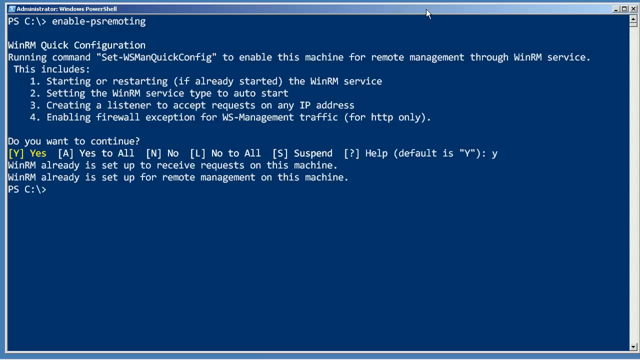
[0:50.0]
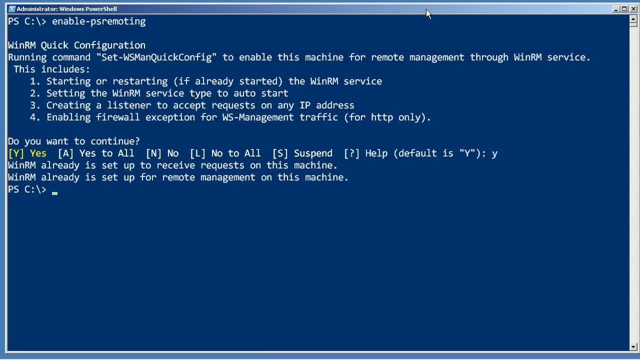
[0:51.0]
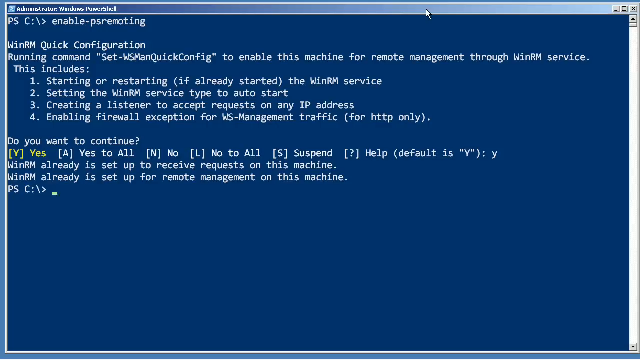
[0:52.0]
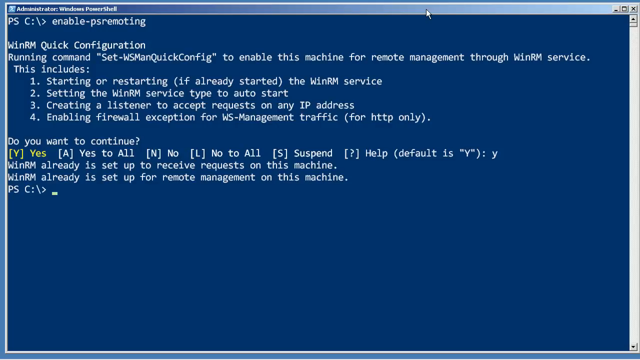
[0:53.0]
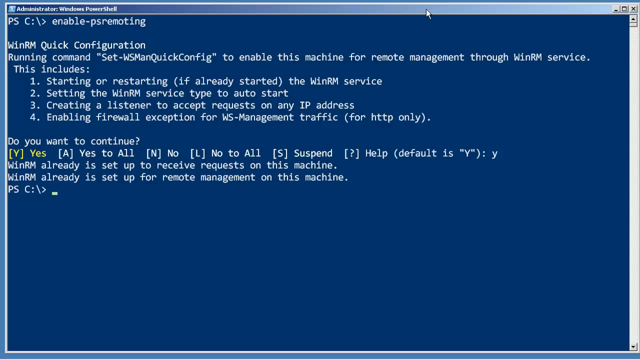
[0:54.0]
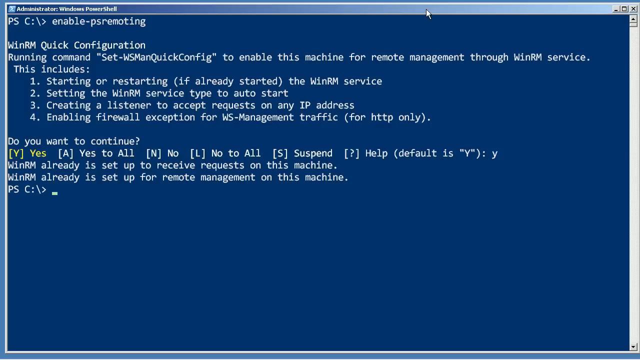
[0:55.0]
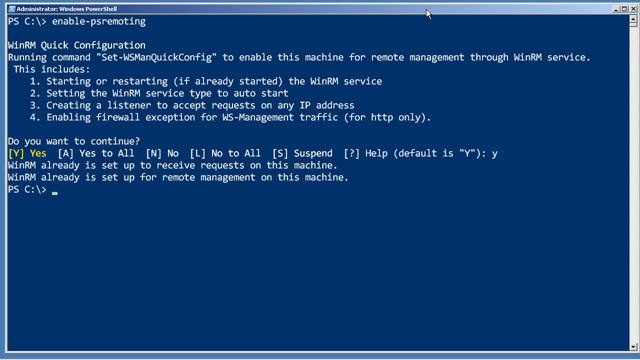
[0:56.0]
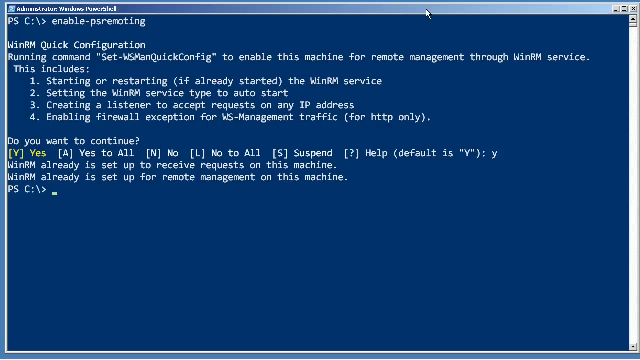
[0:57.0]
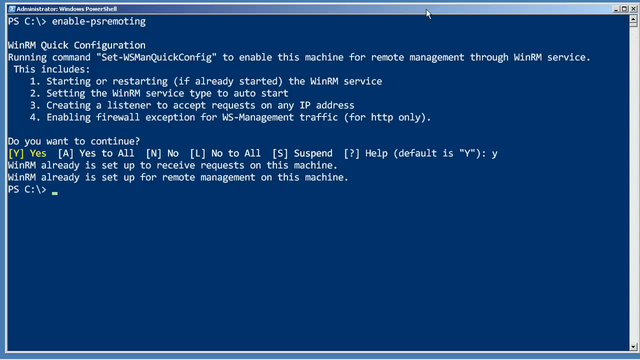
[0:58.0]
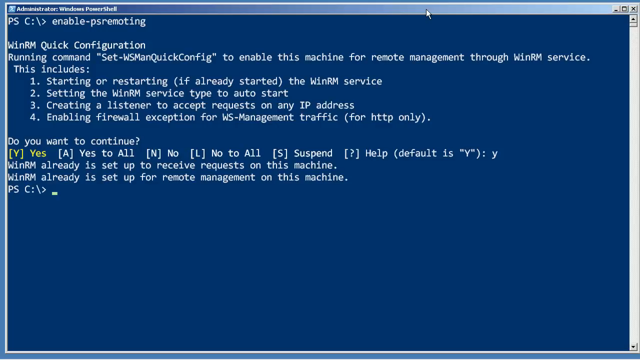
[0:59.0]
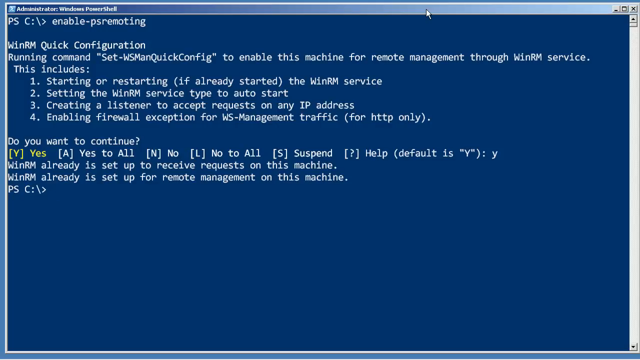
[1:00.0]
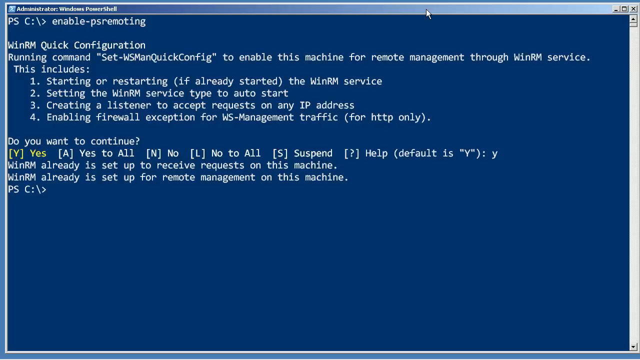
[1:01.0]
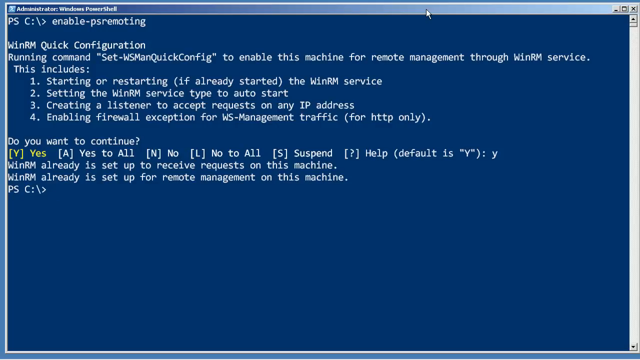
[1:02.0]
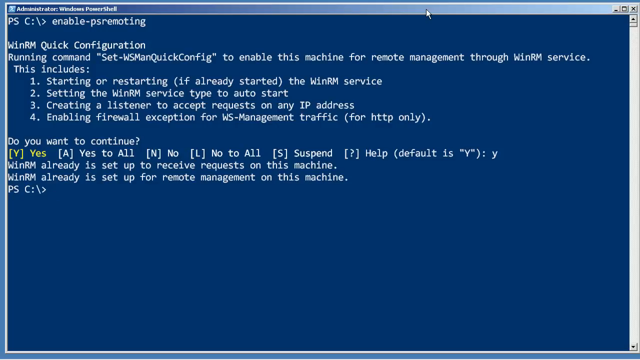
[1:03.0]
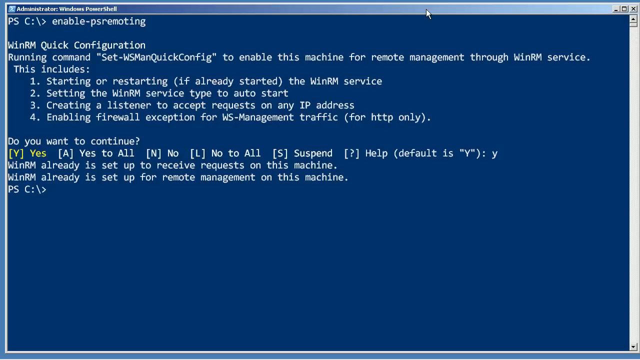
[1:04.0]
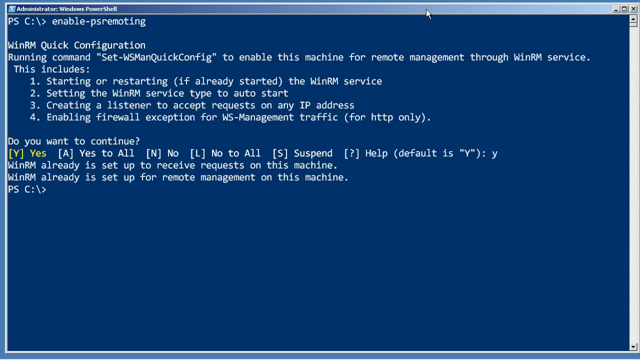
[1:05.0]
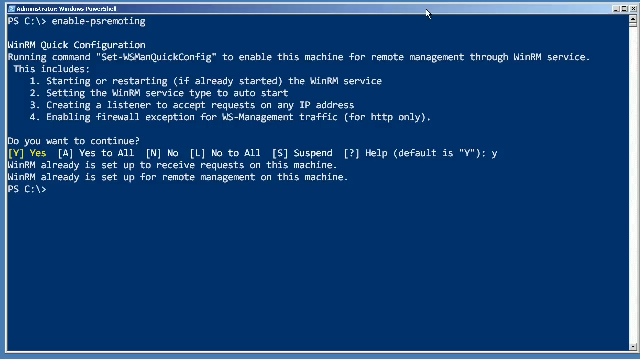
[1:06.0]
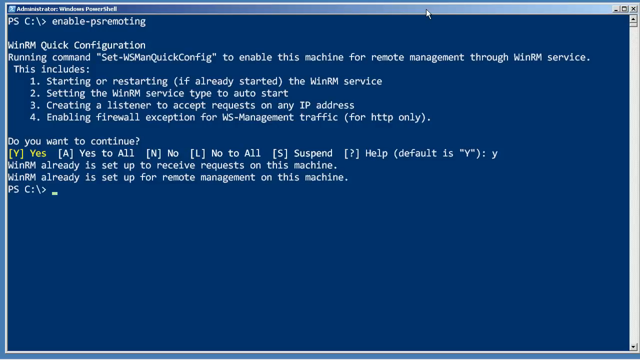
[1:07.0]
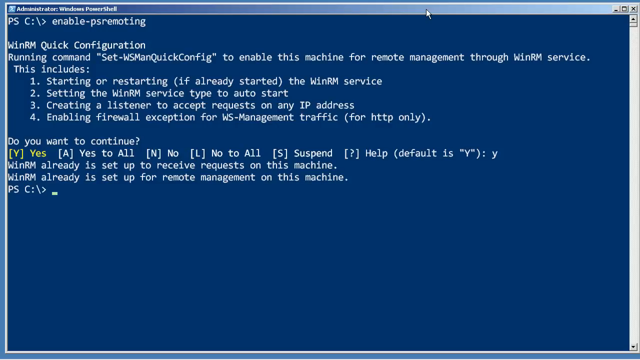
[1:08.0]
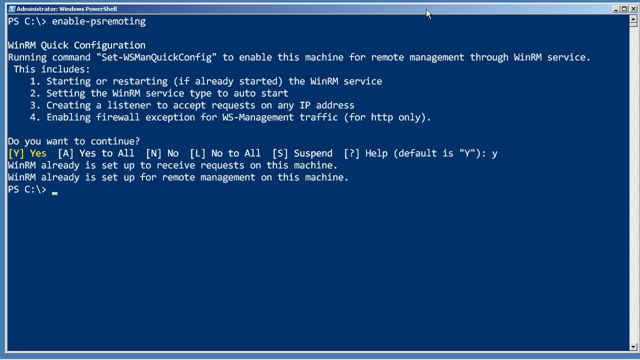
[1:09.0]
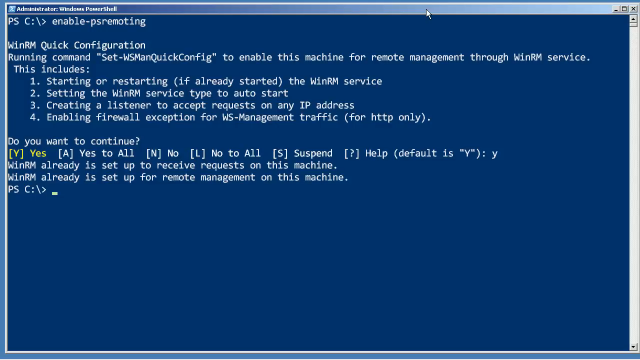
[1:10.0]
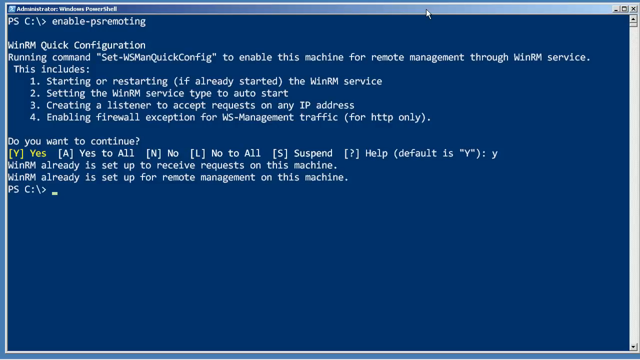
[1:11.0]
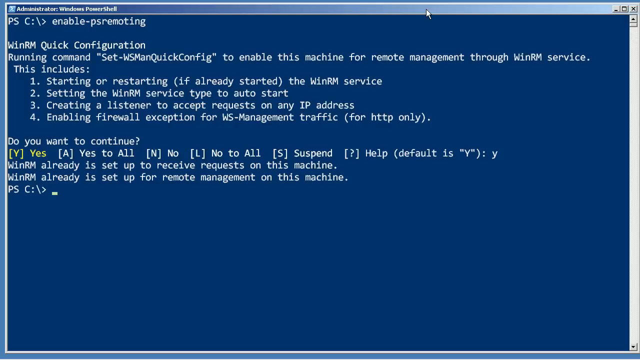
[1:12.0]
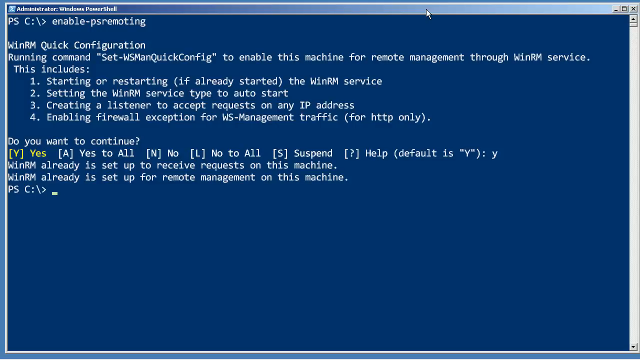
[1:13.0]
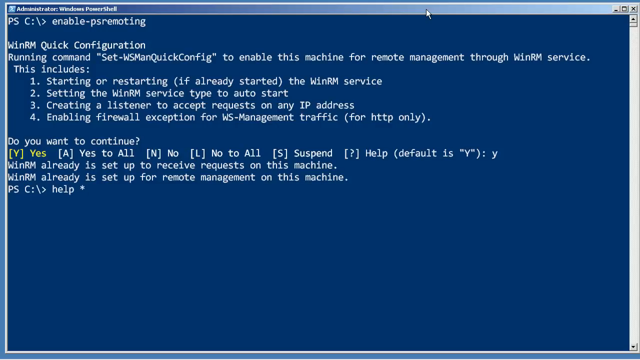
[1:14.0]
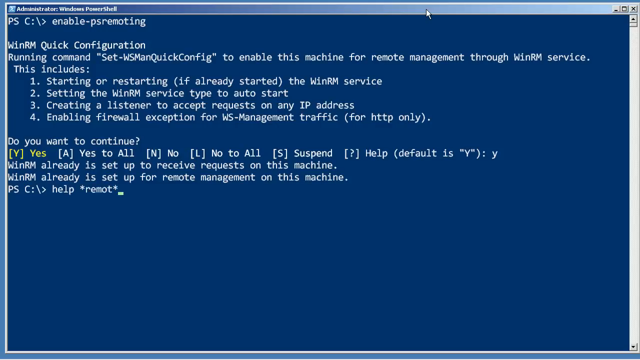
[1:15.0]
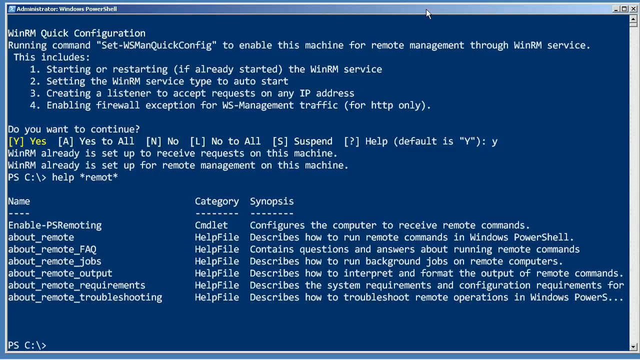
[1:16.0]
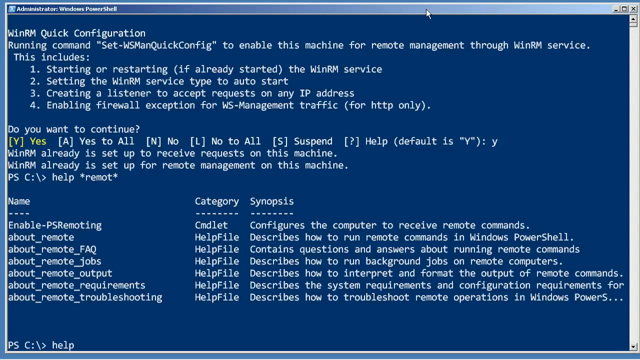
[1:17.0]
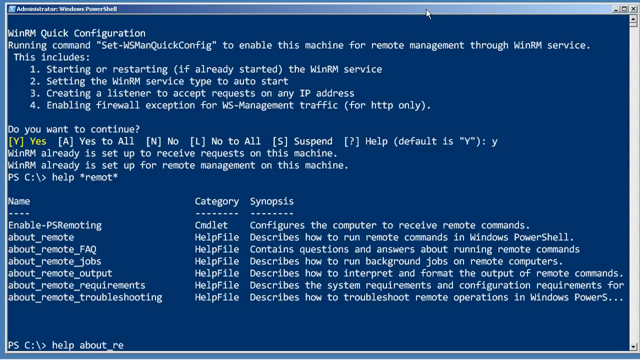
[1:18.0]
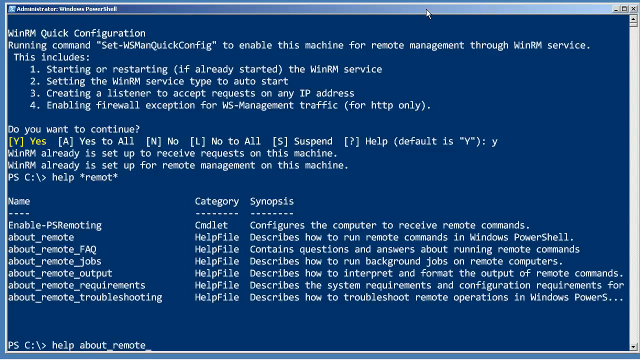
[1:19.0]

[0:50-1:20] Below "do you want to continue?" the options are listed: "Y" for yes in yellow, "[A] yes to all," "[N]" for no, "L" for no to all, "S" for suspend, a question mark for help, and a default of "Y." Next the text reads "WinRM already is set to receive requests on this machine" and "WinRM already is set for remote management on this machine." The prompt with a slash and closing bracket appears again, and the area blinks yellow, waiting for further input. A new listing then pops up with the columns "name," "category" and "synopsis." Under name are an entry beginning "enable ps remote," "about_remote," "about_remote_frequently asked questions," "about_remote_jobs," "about_remote_output," "about_remote_requirements" and "about_remote_troubleshooting." The category column reads "CMDLET" for the first entry and "help file" all the way down for the rest. Each synopsis begins with either "describes" or "contains," mostly "describes."